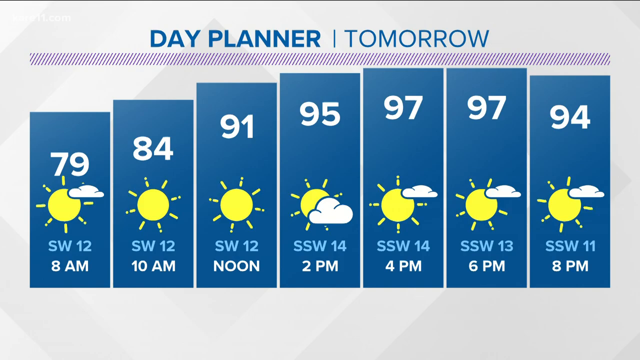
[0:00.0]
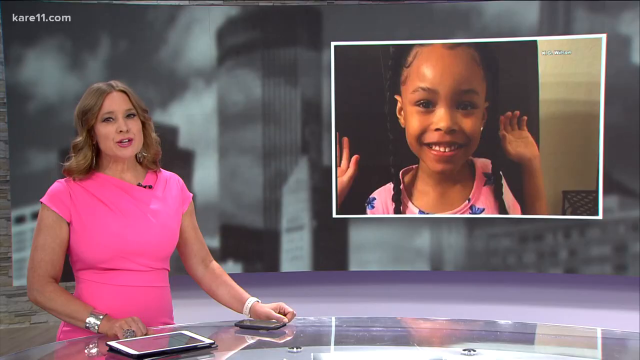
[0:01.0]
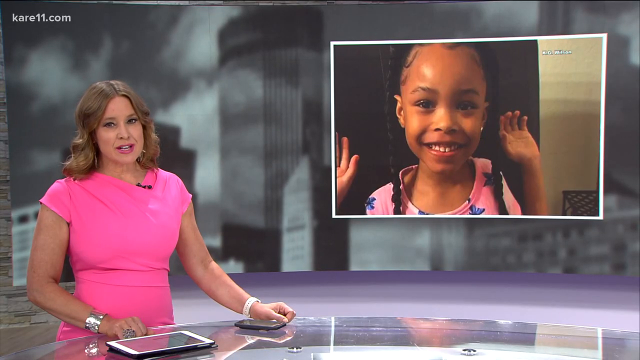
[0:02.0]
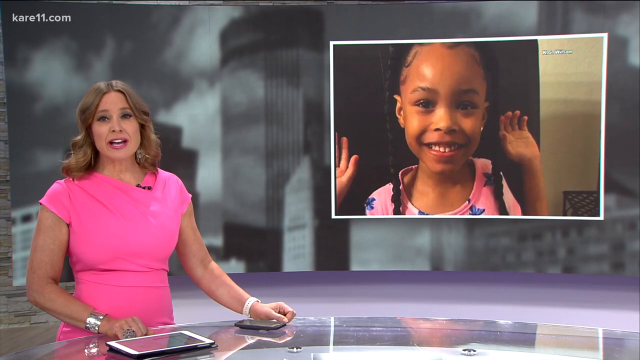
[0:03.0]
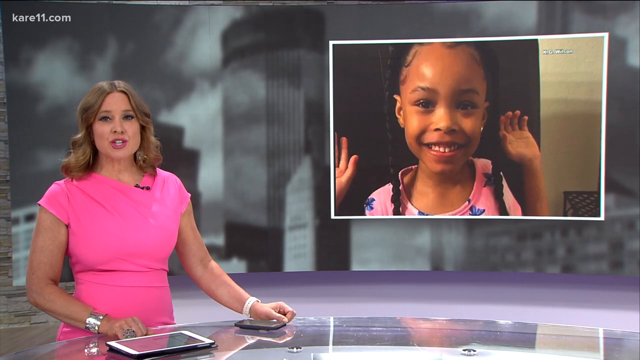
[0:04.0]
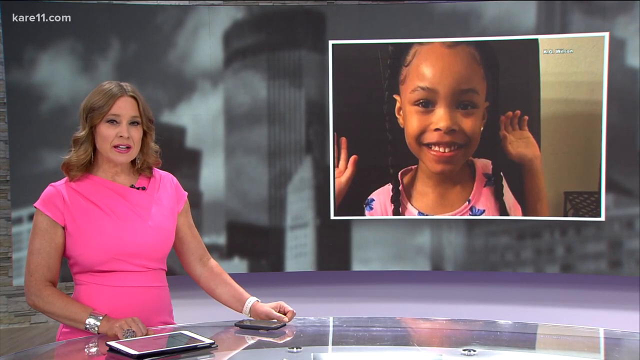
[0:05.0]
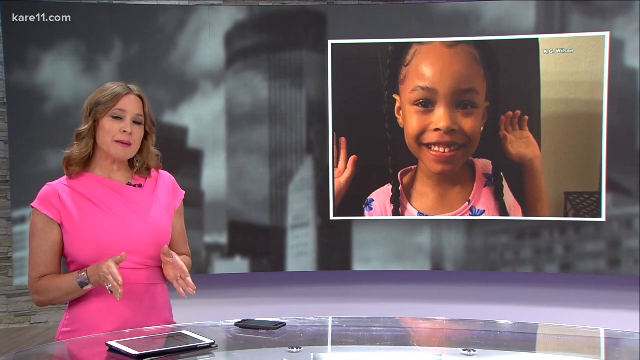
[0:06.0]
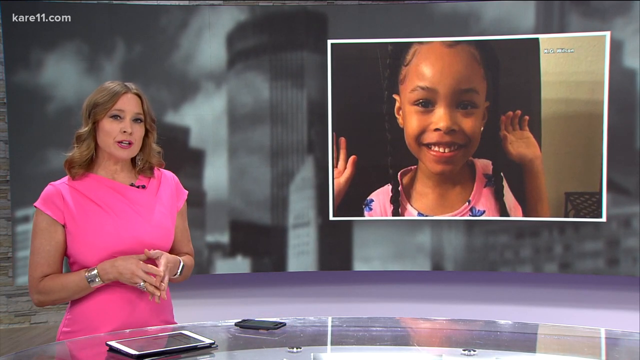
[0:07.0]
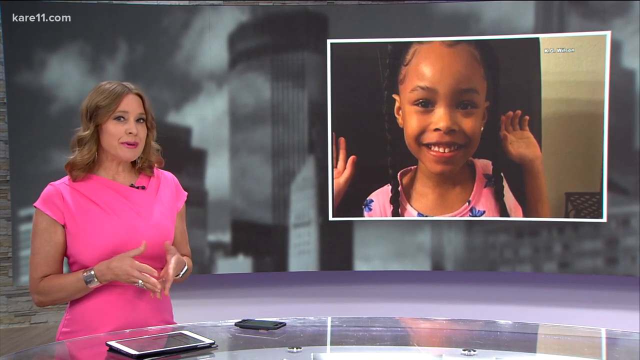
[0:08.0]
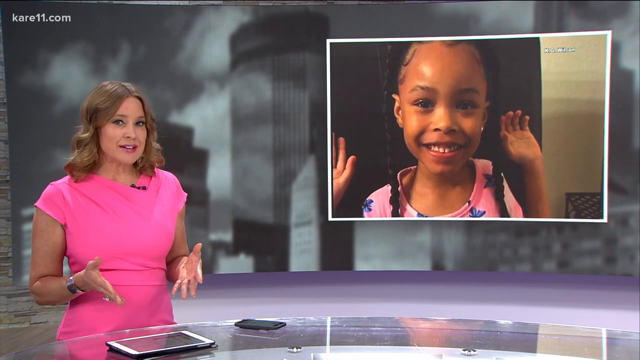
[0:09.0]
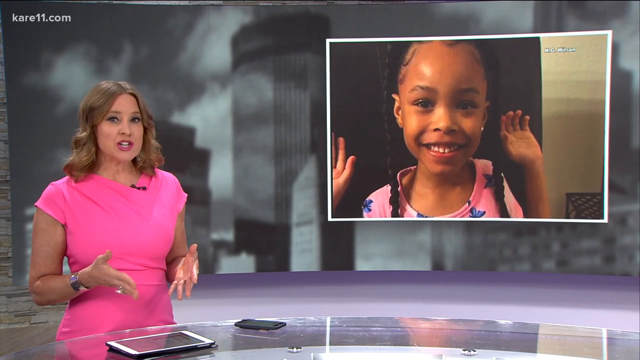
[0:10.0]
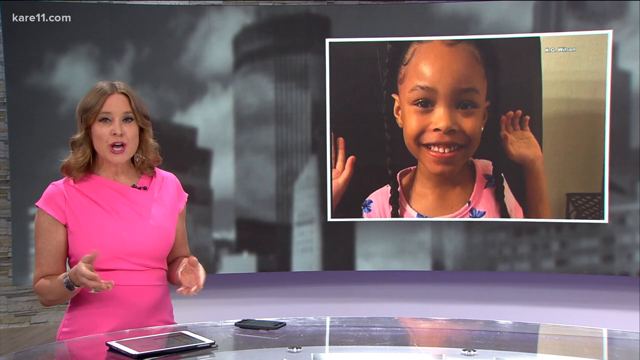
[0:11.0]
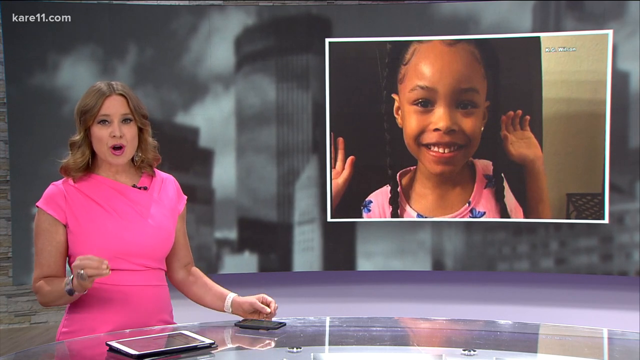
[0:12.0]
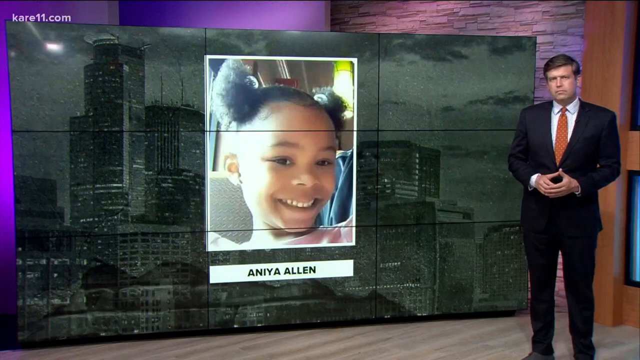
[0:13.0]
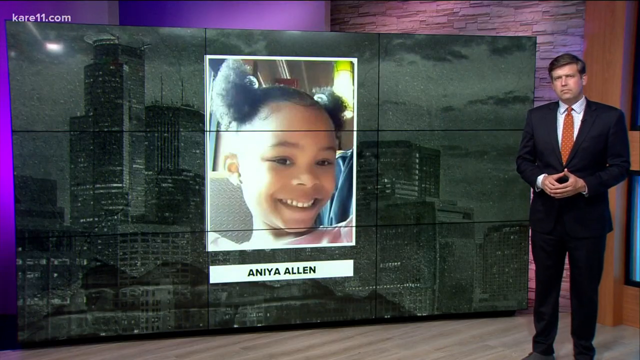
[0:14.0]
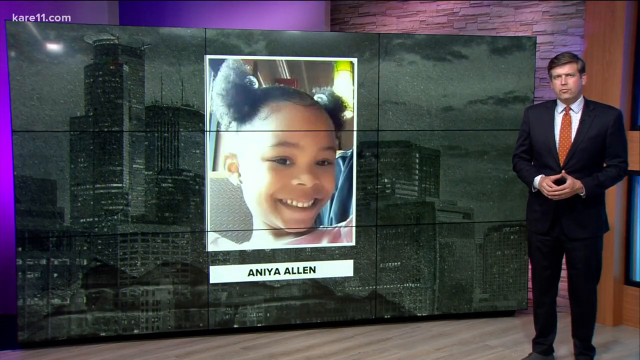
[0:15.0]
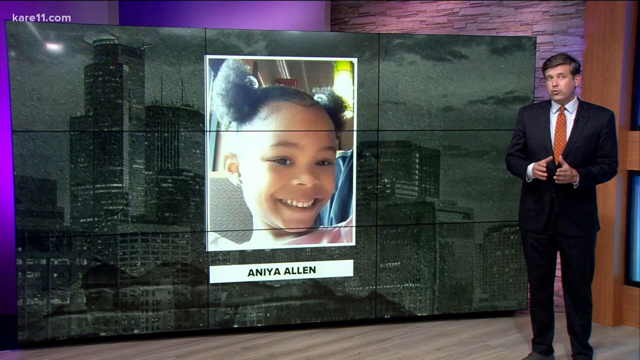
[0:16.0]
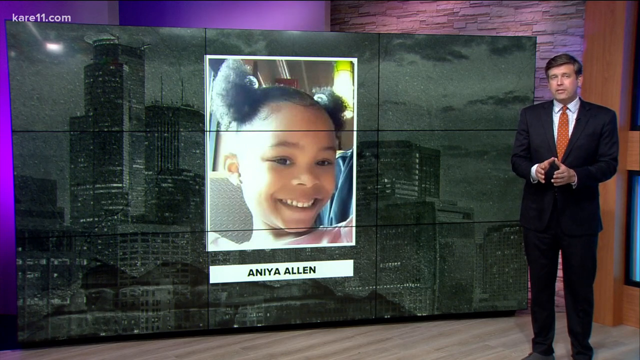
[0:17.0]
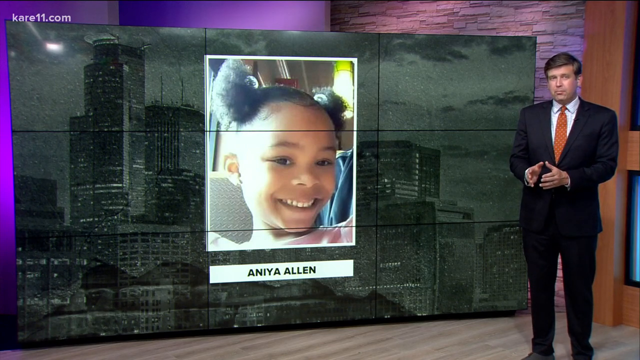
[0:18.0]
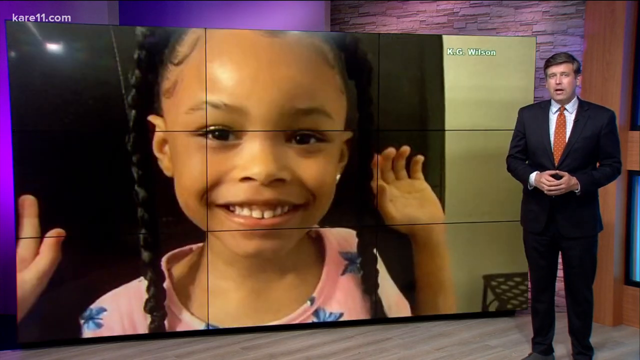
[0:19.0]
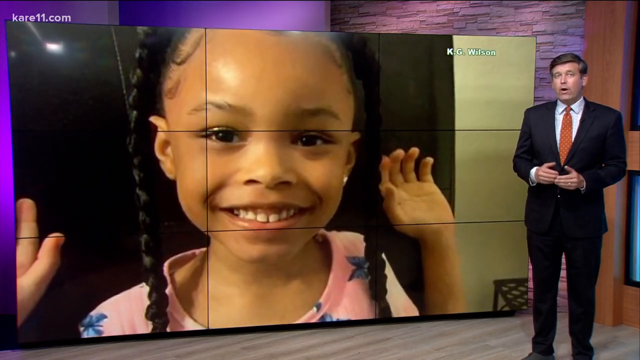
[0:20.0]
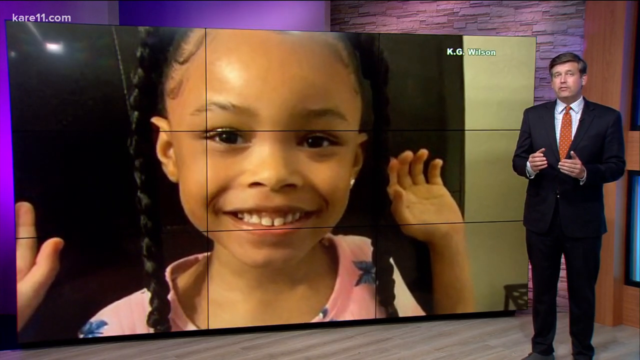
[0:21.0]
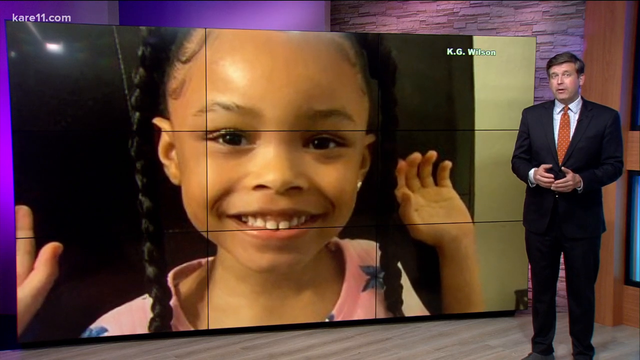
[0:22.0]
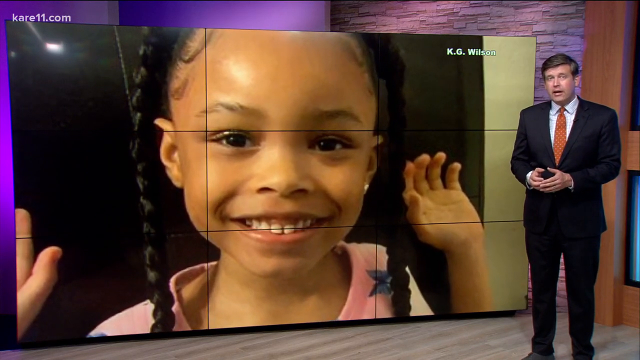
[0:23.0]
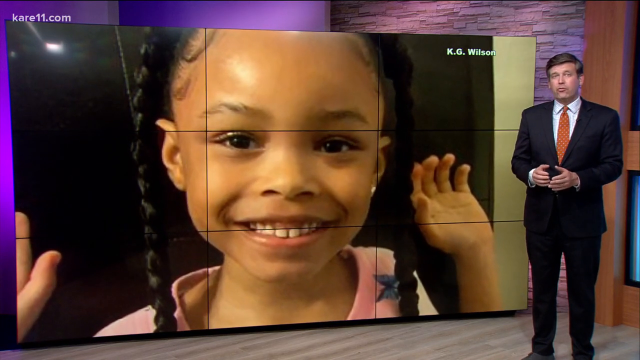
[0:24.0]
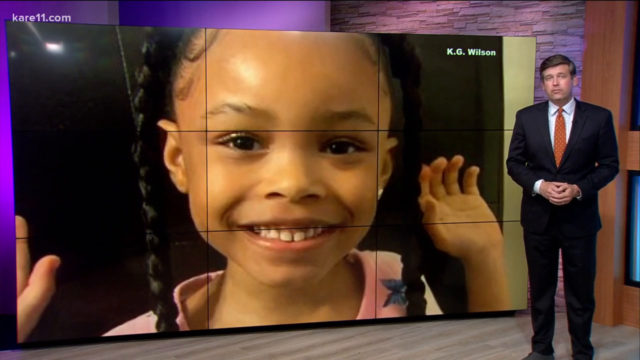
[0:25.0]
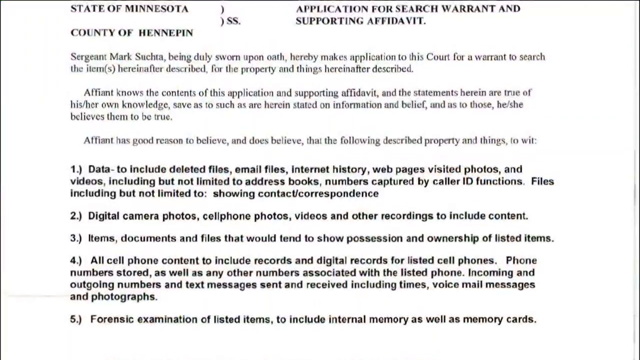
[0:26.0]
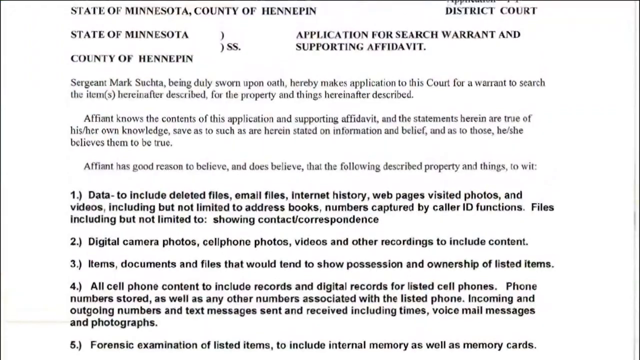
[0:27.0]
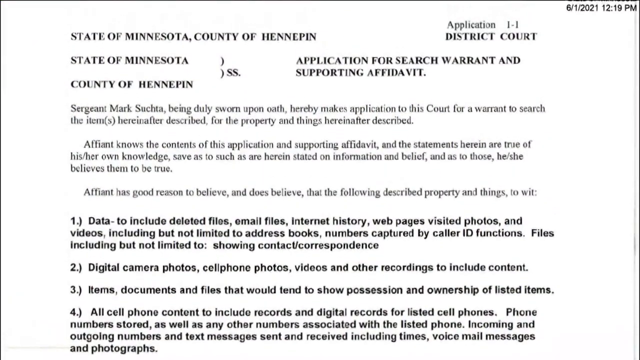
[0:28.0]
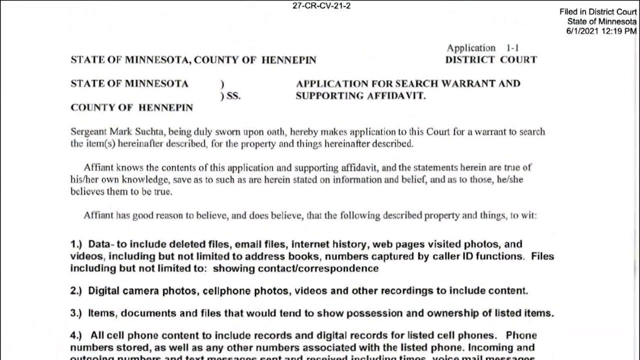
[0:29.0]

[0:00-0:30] The video opens with the title "day planner tomorrow" in blue font. Underneath, a list of times appears: at 8 a.m. it reads "Southwest 12" and 79 degrees; at 10 a.m. "Southwest 12" and 84 degrees; at noon "Southwest 12" and 91 degrees; at 2 p.m. "Southwest 14" and 95 degrees; at 4 p.m. "South Southwest 14"; at 6 p.m. "South Southwest 13"; and at 8 p.m. "South Southwest 11". A woman in what looks like a short-sleeved pink dress is then seen standing. An image of a little girl appears; she looks maybe four or five years old, has two pigtails and brown skin, and her name is Aniya Allen. A male news reporter is on the right side of the screen, wearing what looks like an orange tie. A different picture of the girl is shown, in which she is smiling. Then text reads "State of Minnesota" on paperwork that is an application, including an affidavit, stating a need to collect data including digital records.